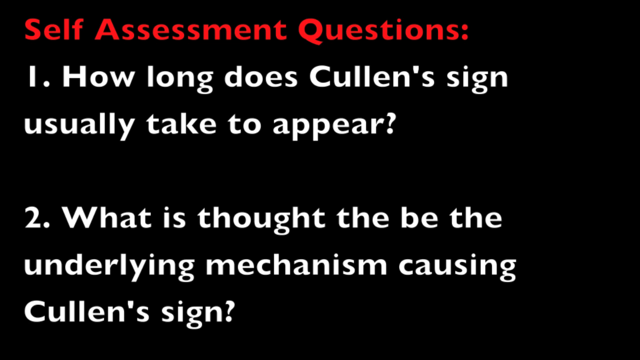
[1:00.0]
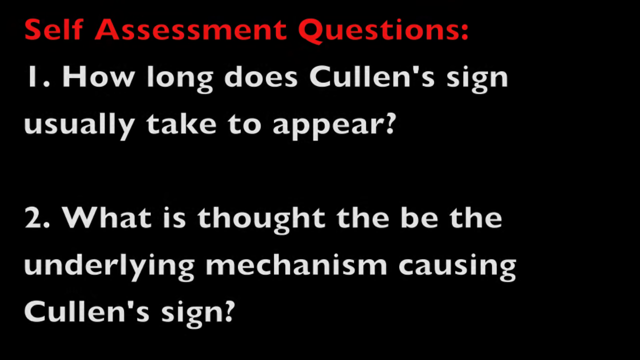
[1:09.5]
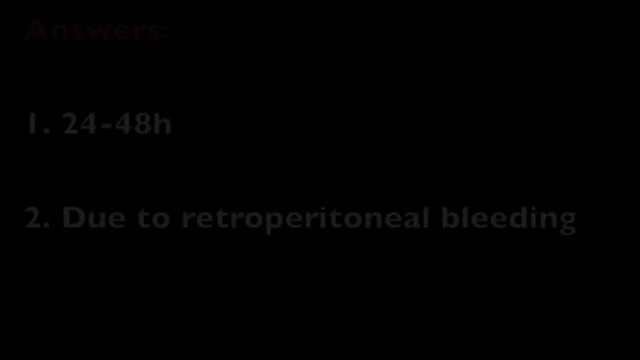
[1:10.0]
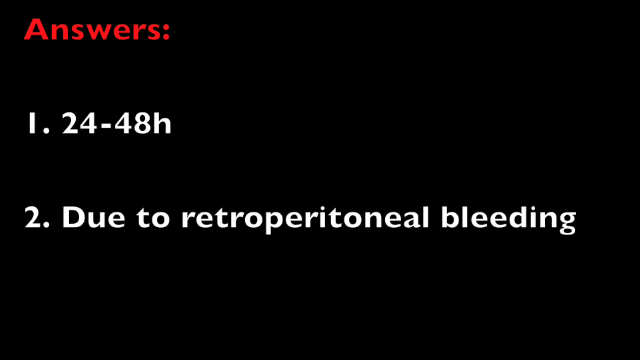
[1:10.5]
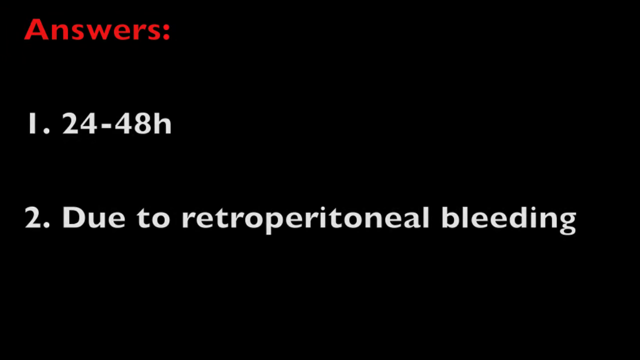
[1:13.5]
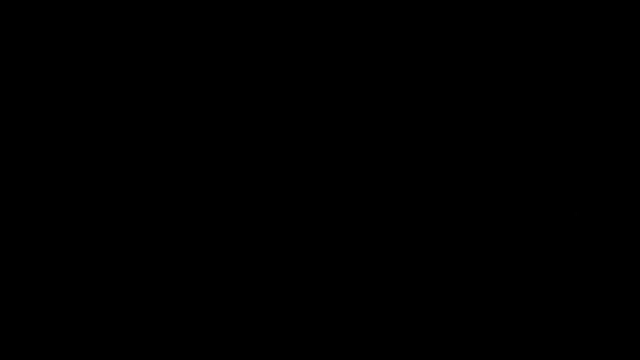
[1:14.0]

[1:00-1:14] Each numbered item is presented as a question with a question mark. The next screen shows "answers" in red with a colon, followed by number 1, "24-48H," apparently meaning 24 to 48 hours, and number 2, "due to retroperitoneal bleeding." Each number is followed by a period. The video then fades to black and ends, with no end card.